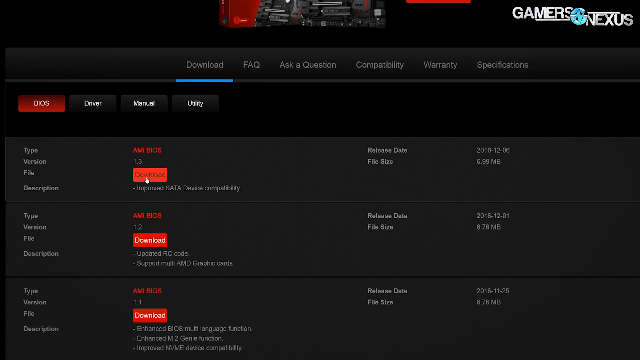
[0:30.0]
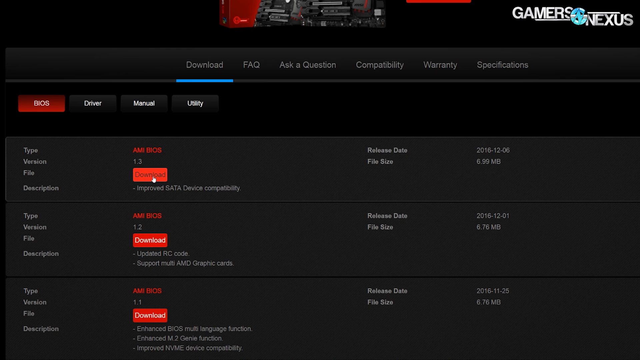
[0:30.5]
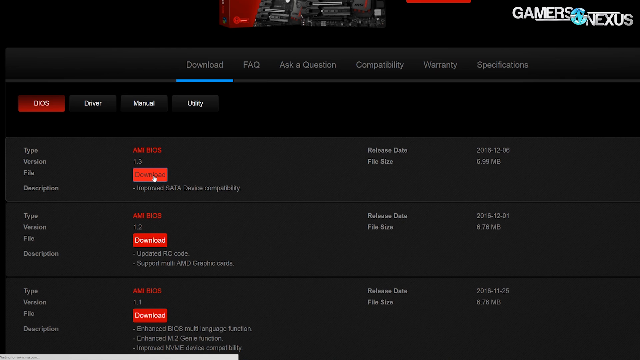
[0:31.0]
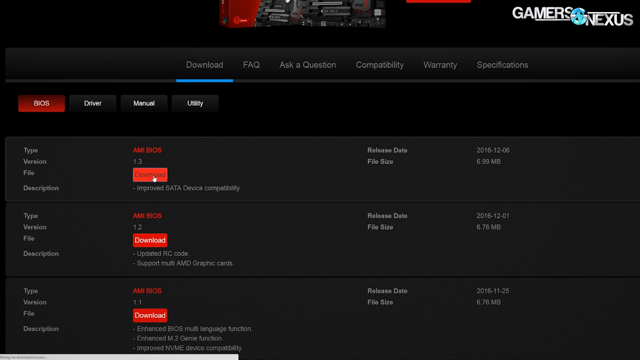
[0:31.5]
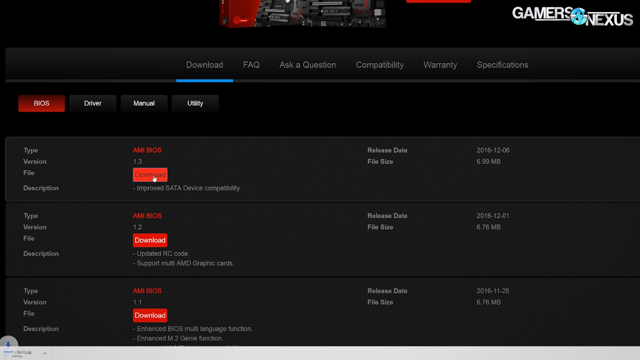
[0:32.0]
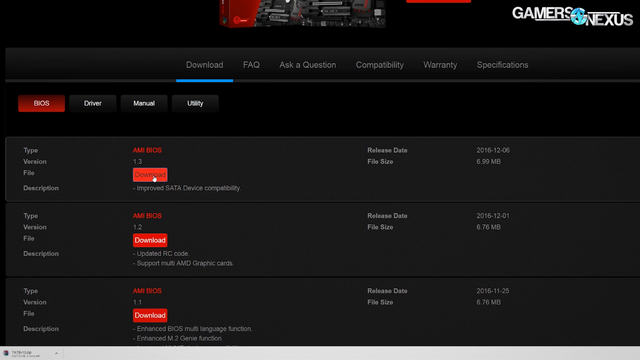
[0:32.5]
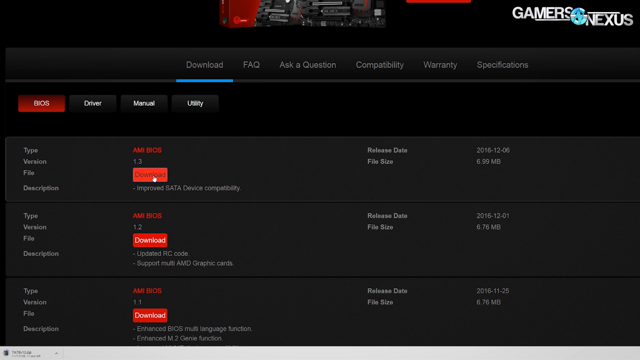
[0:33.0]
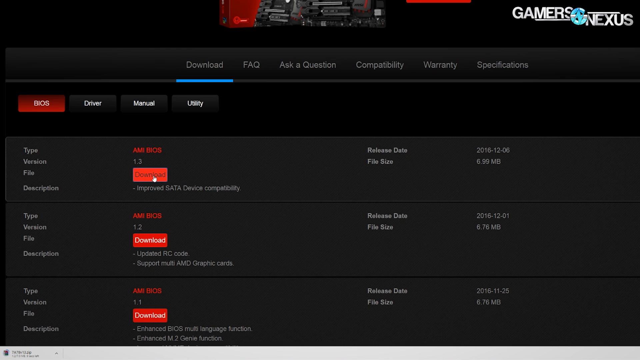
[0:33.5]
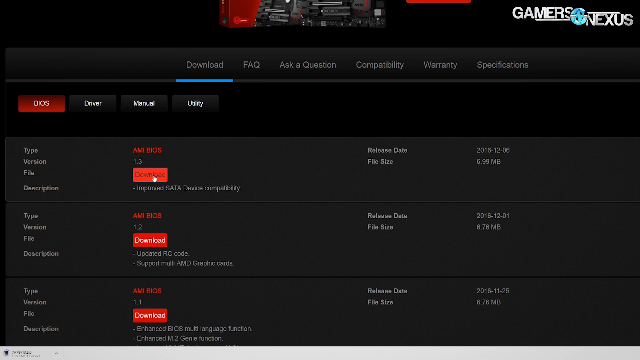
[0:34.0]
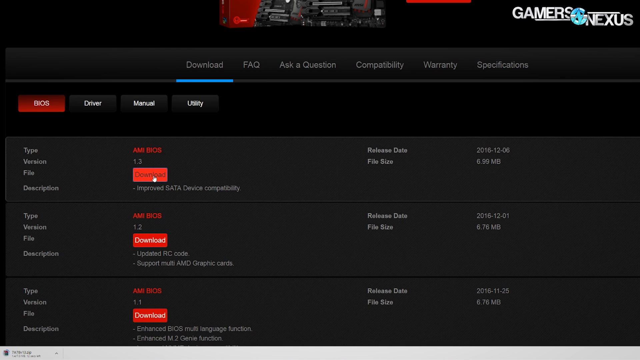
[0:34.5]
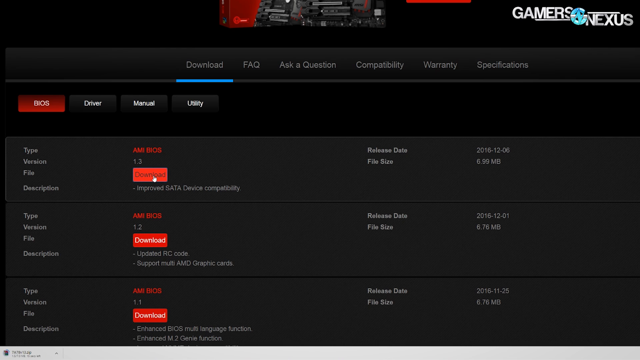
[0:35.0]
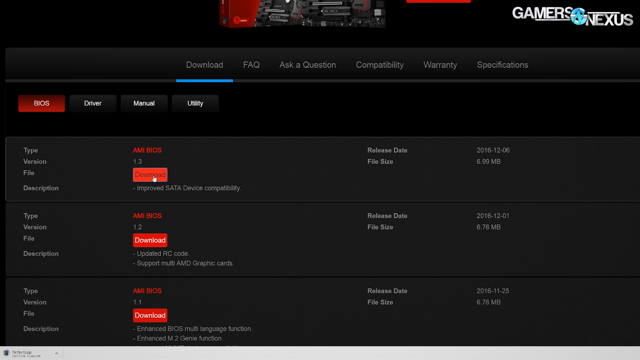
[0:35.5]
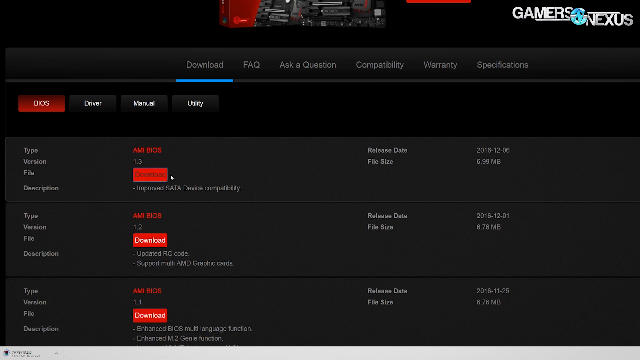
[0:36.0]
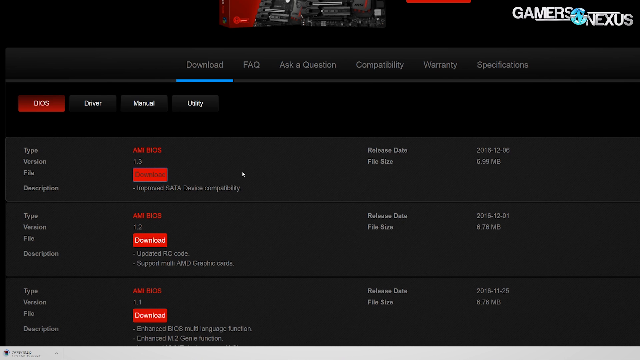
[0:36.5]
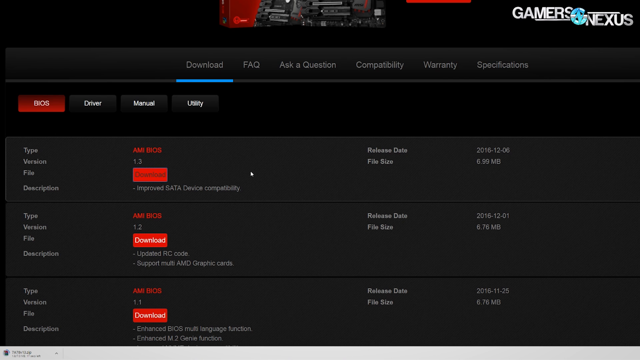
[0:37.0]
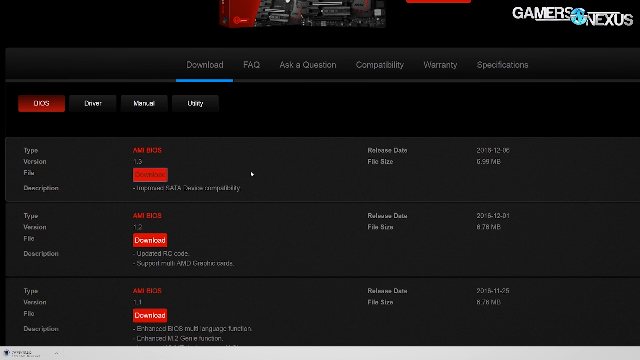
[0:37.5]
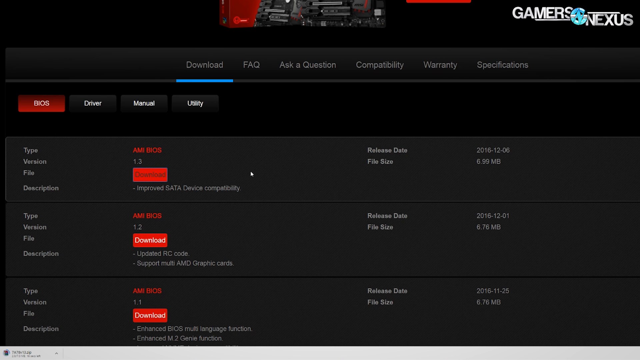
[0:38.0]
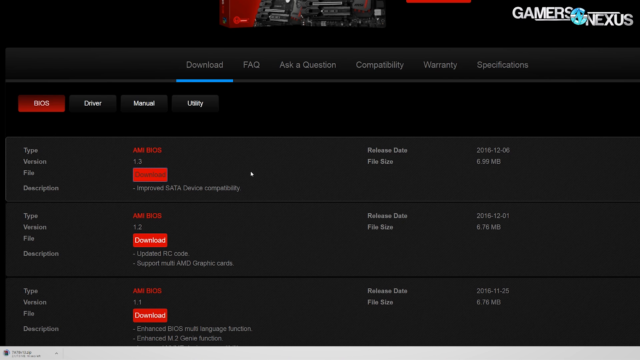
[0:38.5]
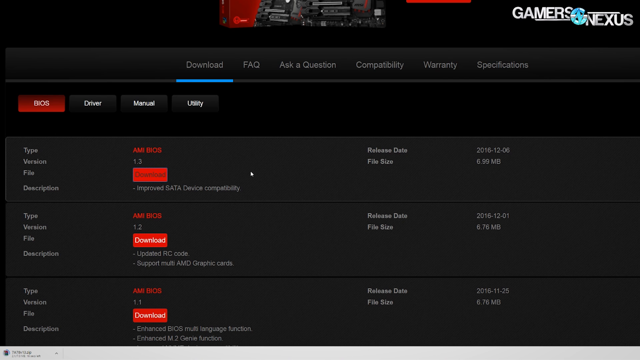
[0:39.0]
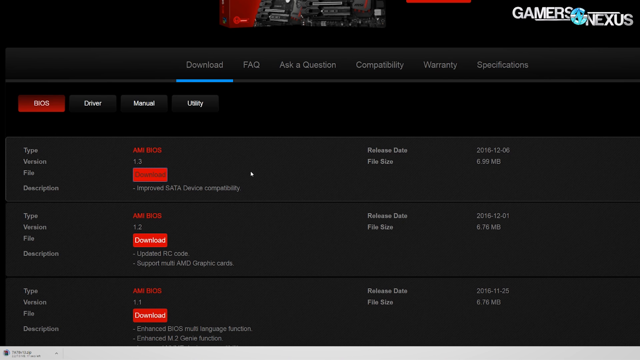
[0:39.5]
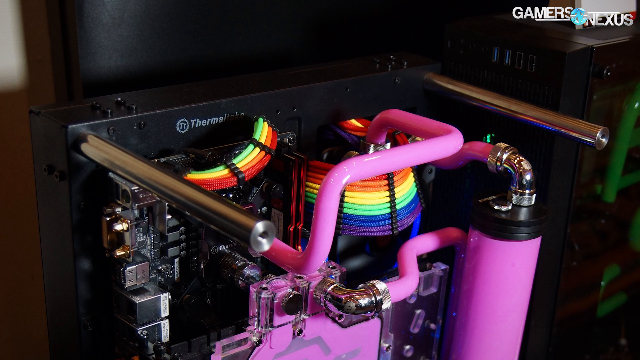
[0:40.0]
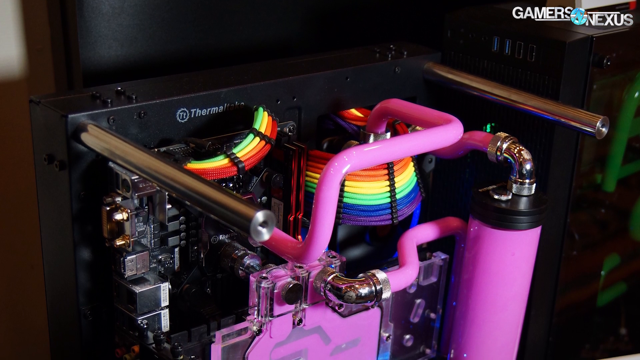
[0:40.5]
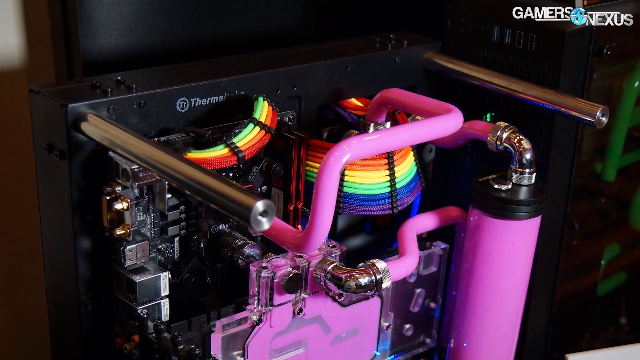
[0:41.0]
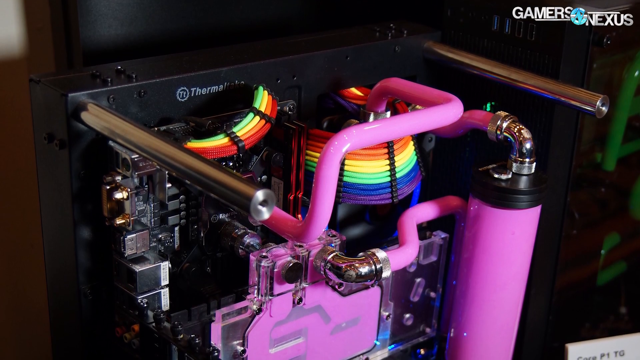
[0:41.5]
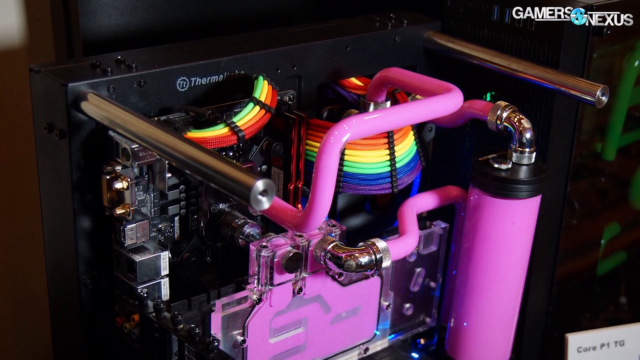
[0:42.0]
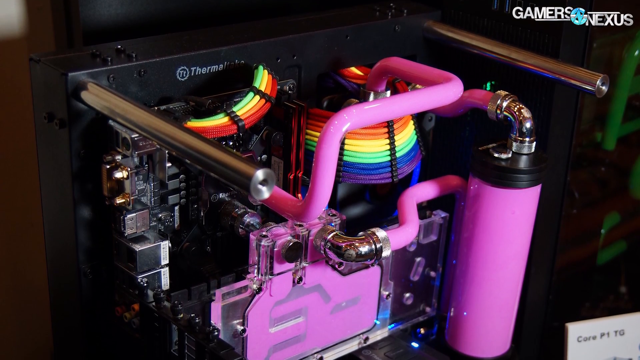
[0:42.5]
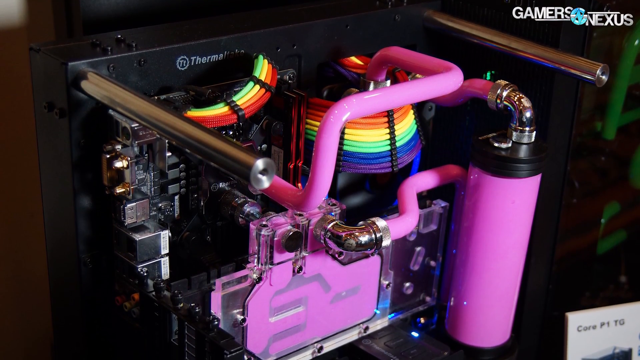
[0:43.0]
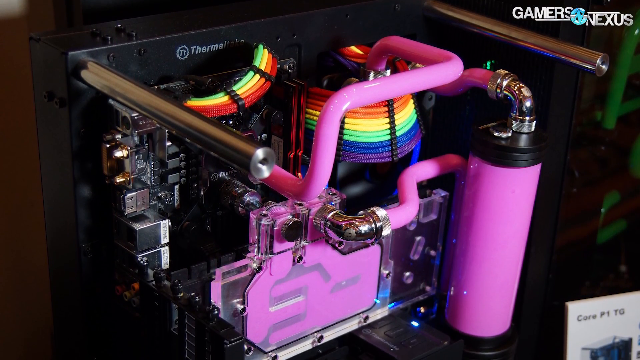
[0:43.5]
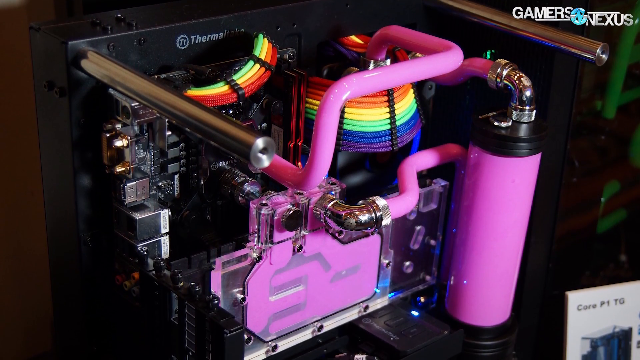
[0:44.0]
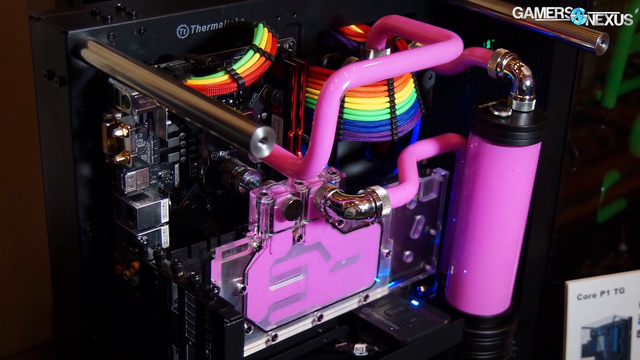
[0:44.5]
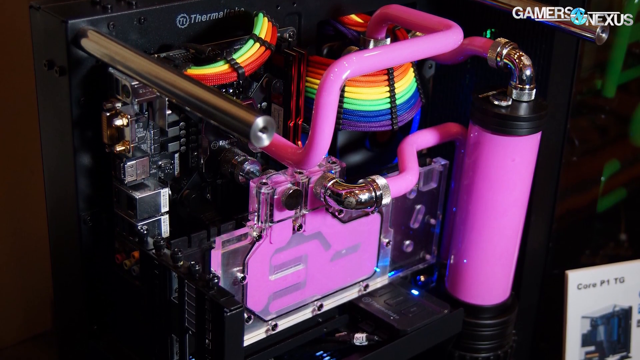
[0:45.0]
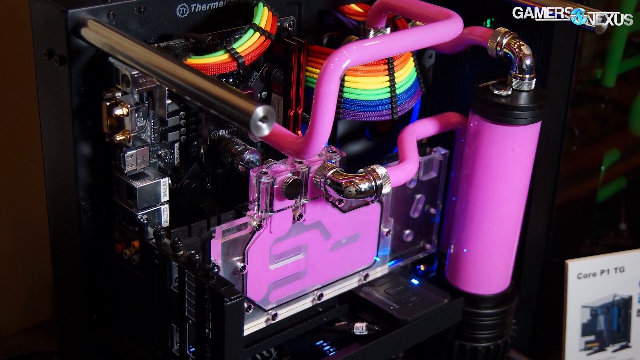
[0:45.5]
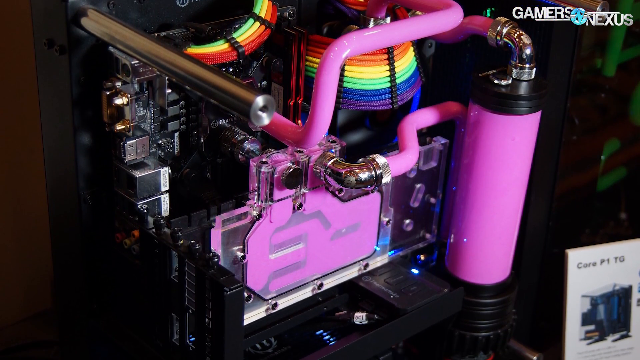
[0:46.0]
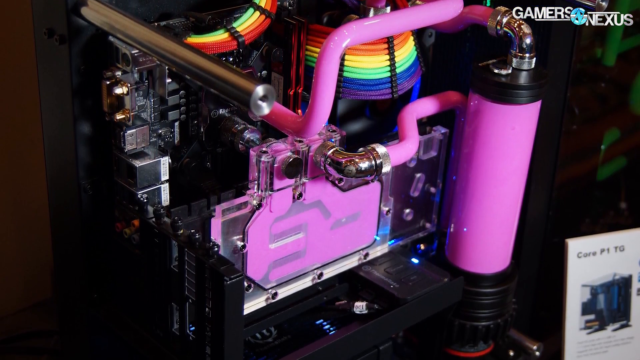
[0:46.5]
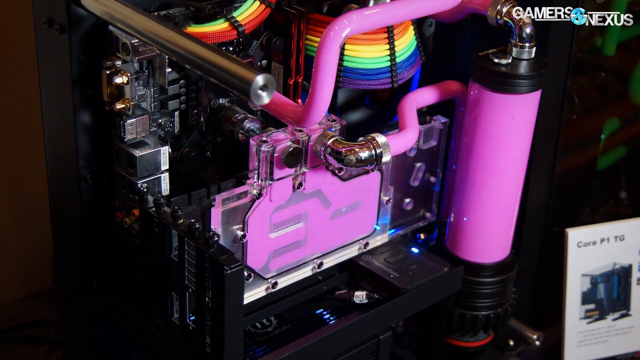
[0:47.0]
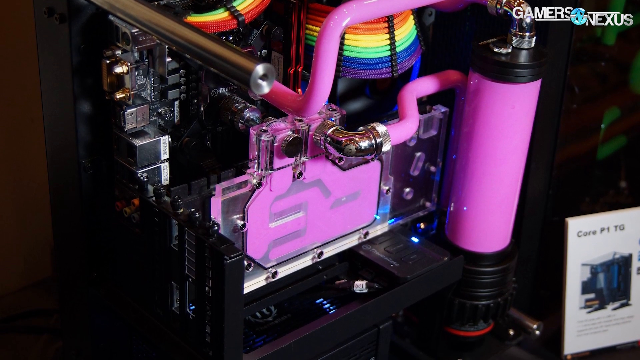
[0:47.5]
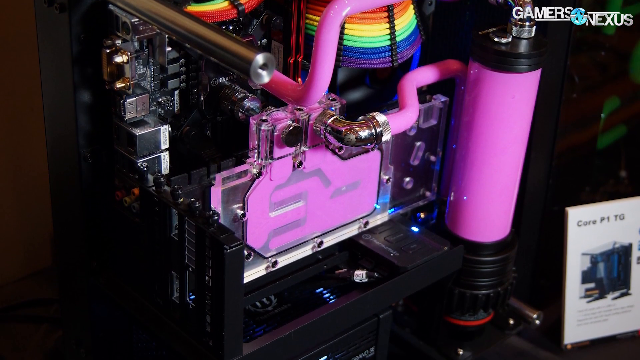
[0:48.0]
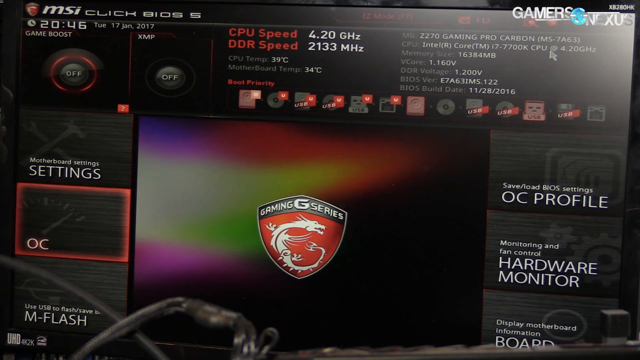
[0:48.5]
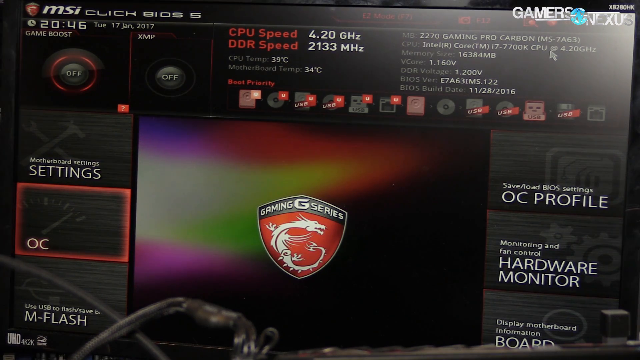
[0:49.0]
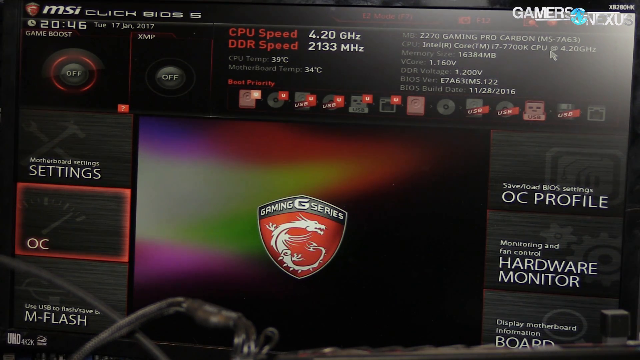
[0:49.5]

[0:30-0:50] At the top of the screen it says "Gamers Nexus". The screen shows what looks like a download page with about three different things to download, including "AMIBIOS" and some type of support. The video then shows the inside of a PC with a lot of pink, a pink little pipe-like part, and rainbow-colored wires. Next, text on the screen reads "gaming series", "CPU speed", "DDR speed" and "CPU temp", apparently listing specs about the computer.